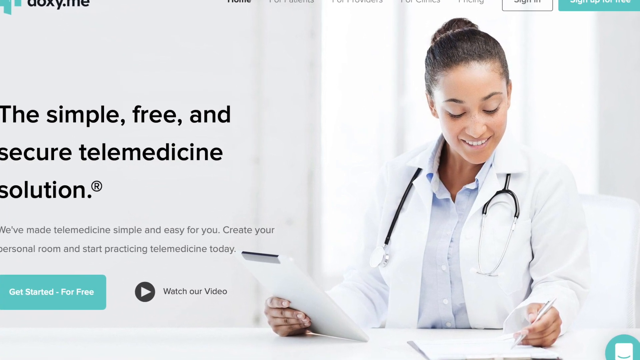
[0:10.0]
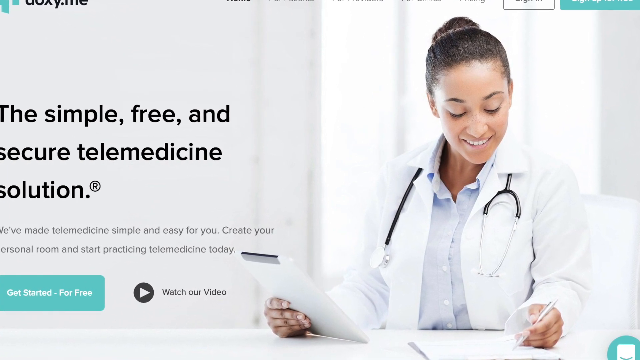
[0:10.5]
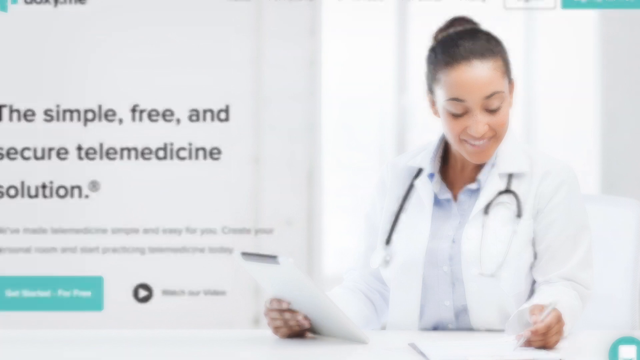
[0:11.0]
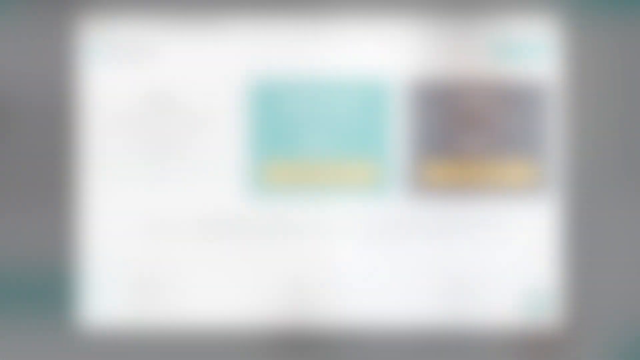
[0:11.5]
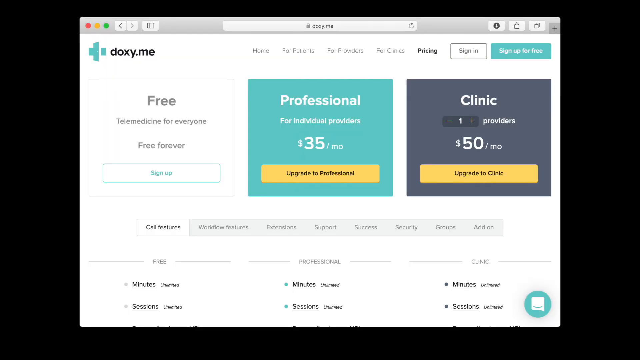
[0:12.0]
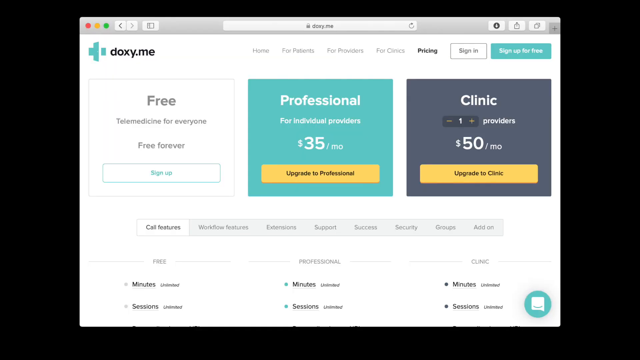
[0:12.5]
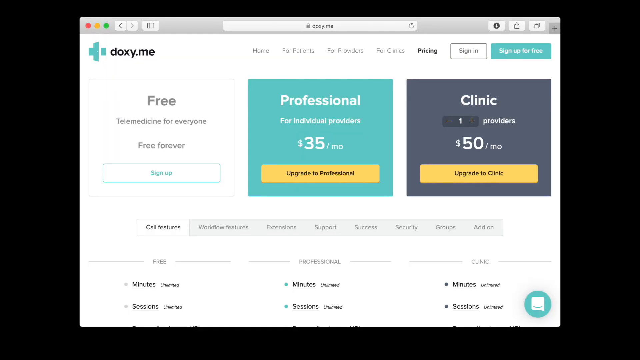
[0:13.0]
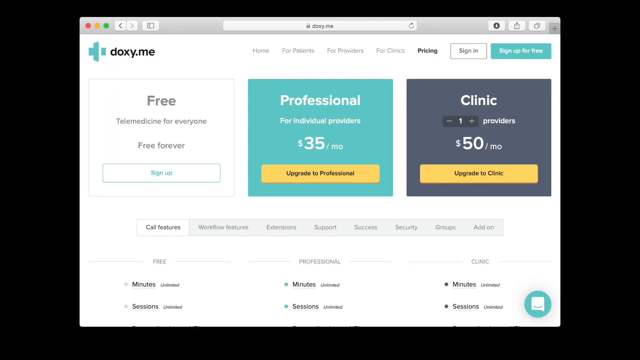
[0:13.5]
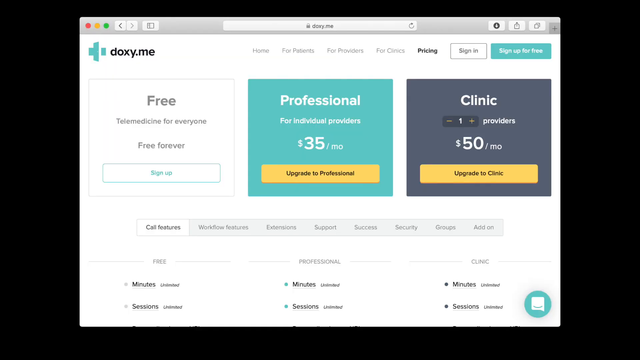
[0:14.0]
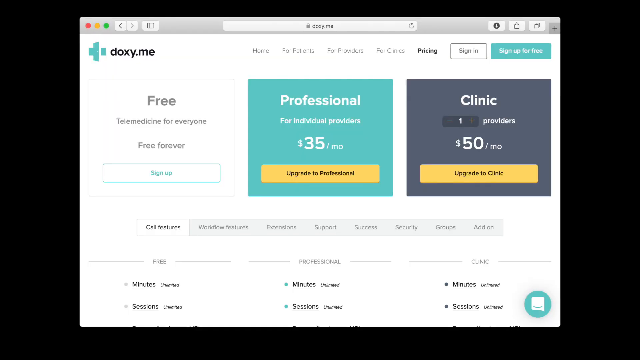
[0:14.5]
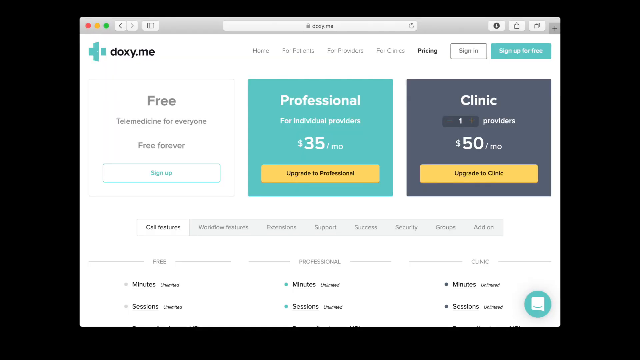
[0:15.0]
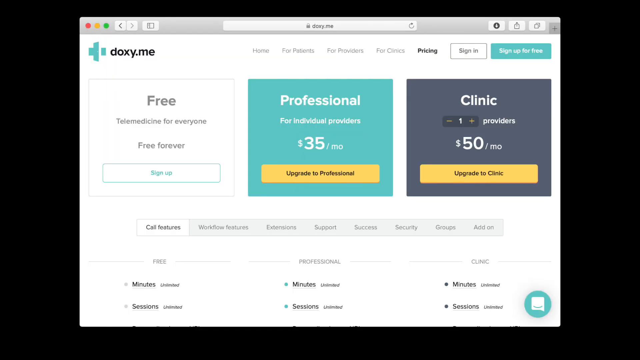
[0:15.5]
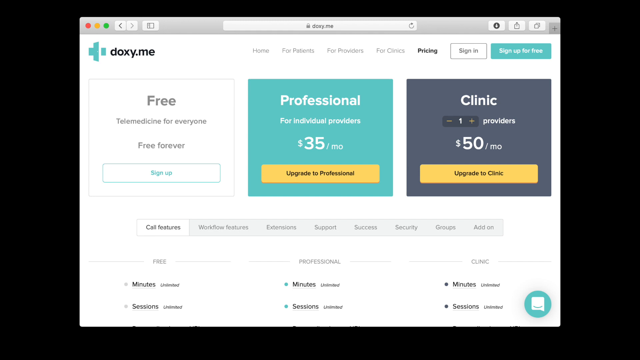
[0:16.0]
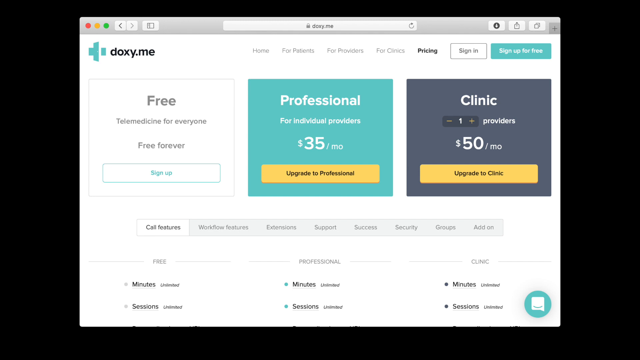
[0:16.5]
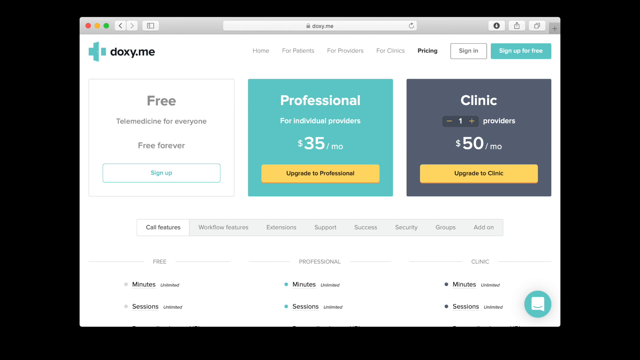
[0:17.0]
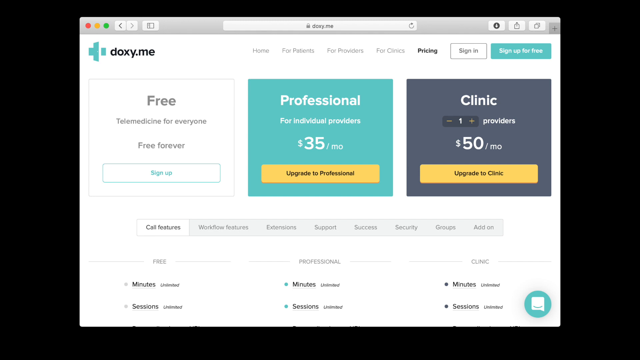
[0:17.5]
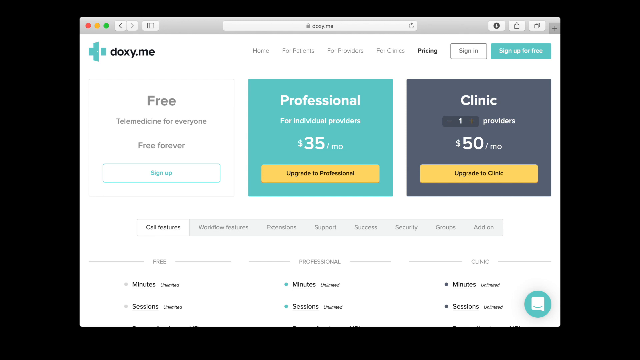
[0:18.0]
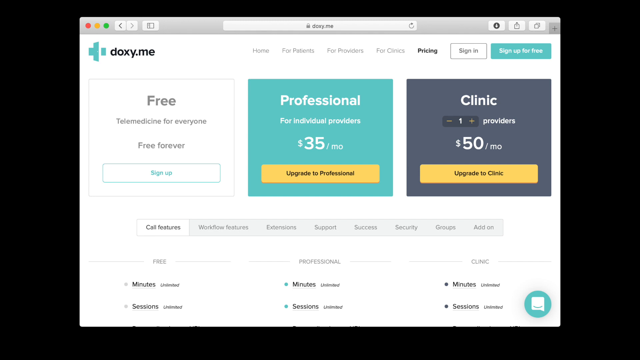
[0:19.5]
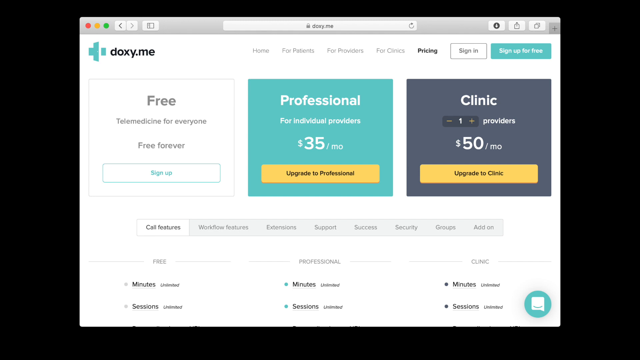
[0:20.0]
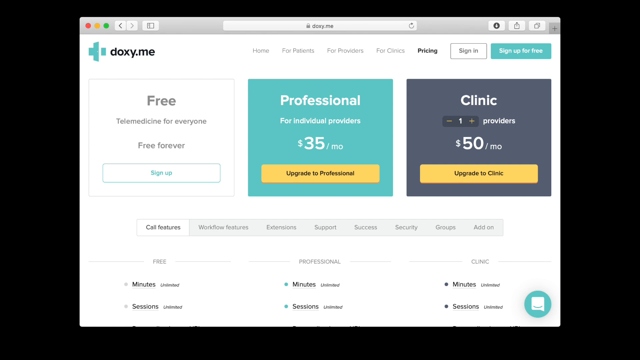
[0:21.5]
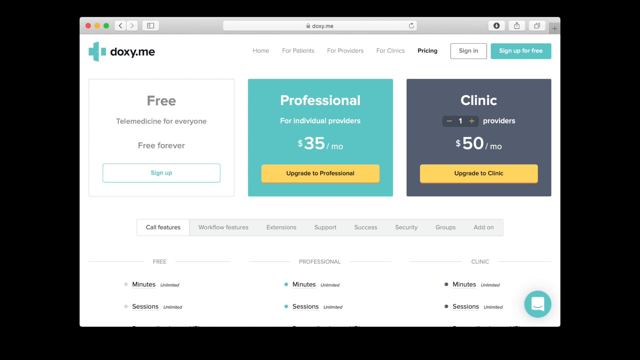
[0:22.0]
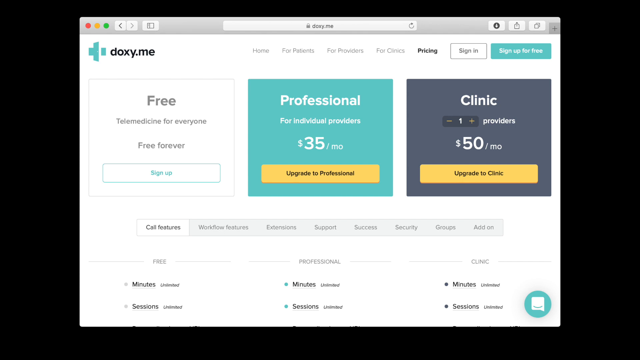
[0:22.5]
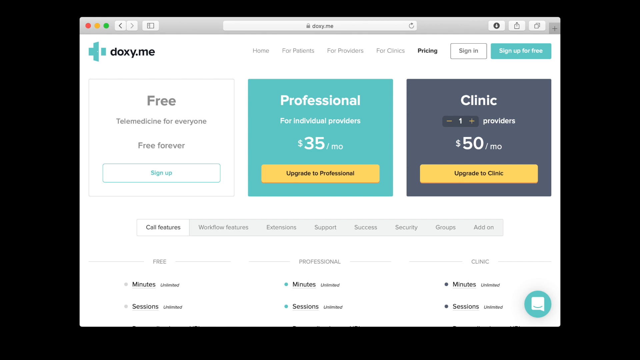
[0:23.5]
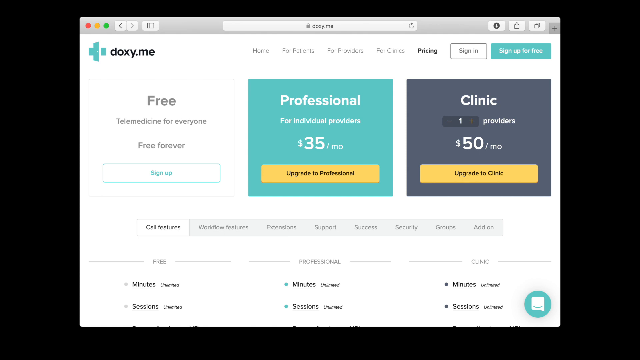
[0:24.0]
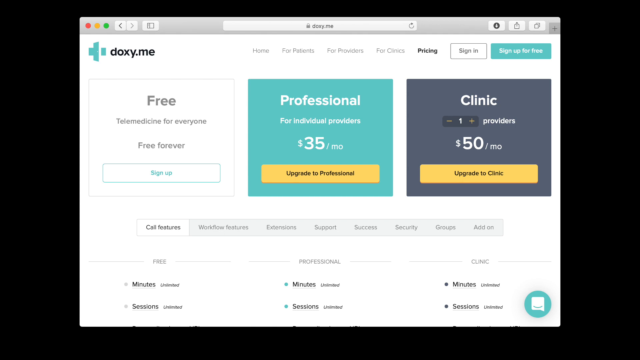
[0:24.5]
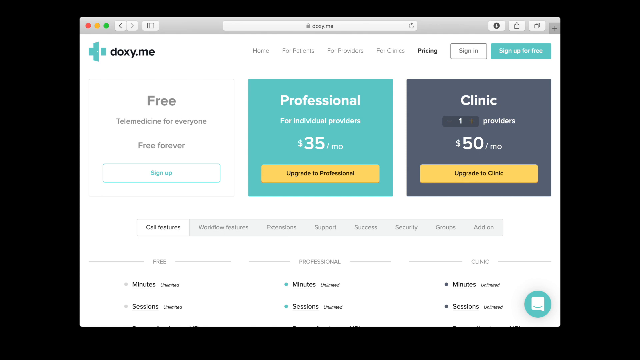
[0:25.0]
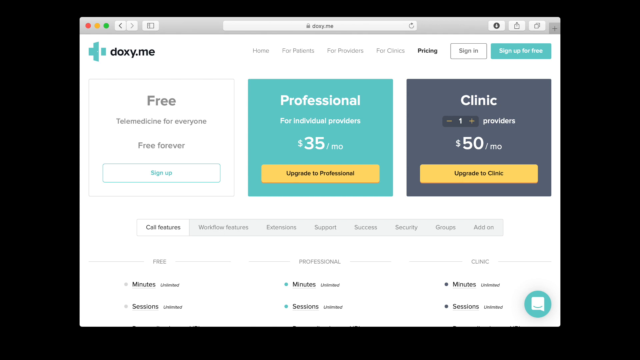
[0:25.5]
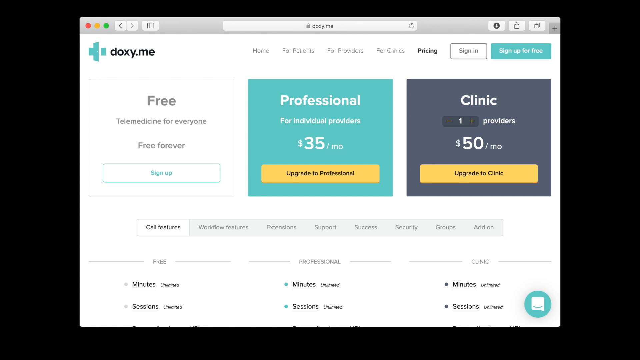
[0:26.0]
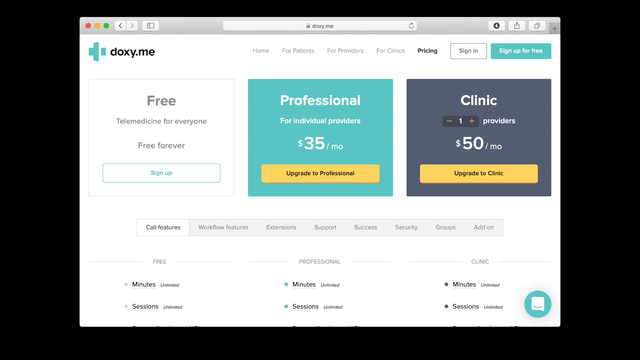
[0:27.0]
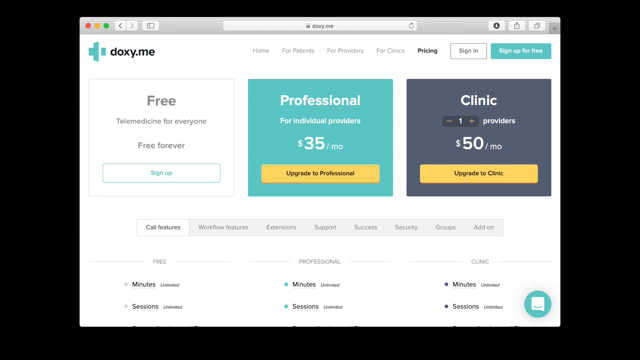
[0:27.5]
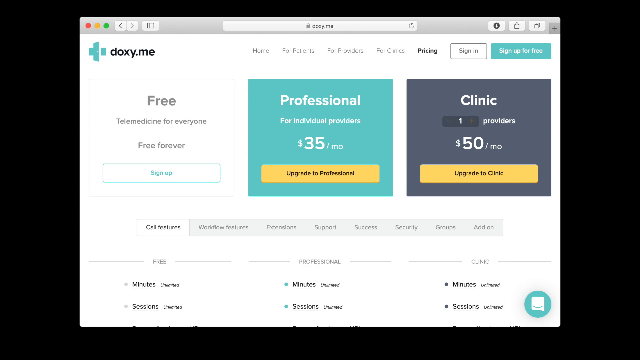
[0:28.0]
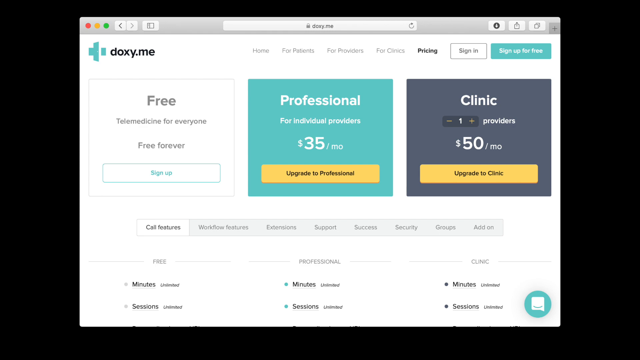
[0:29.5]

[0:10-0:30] A picture shows a doctor or nurse, most likely a doctor, in a white physician's coat with a stethoscope around her neck. She is female with her hair pulled up, and she could be Hispanic or black. The top left corner says "doxy.me," and tabs run across the screen at the top right. Text on a white background says "a simple, free, and secure telemedicine solution," with other writing in fine print beneath it. Next comes a doxy.me page with three main square sections: a white one on the left that says "free," a professional square in the center that says "$35 a month," and a purple square on the right that says "$50 a month." The professional and clinic blocks are highlighted with color.